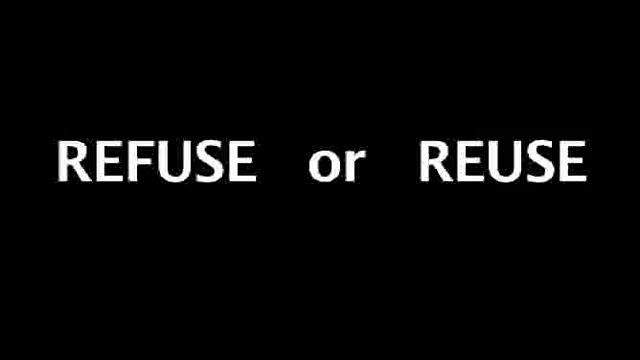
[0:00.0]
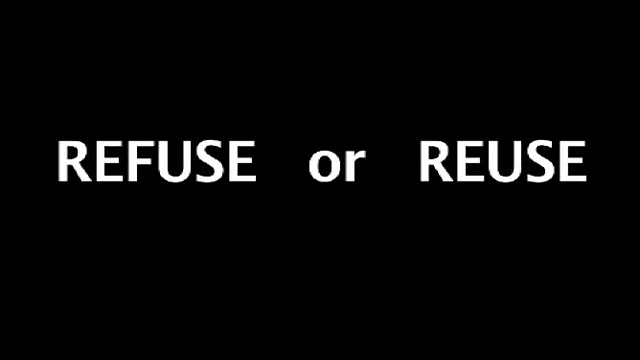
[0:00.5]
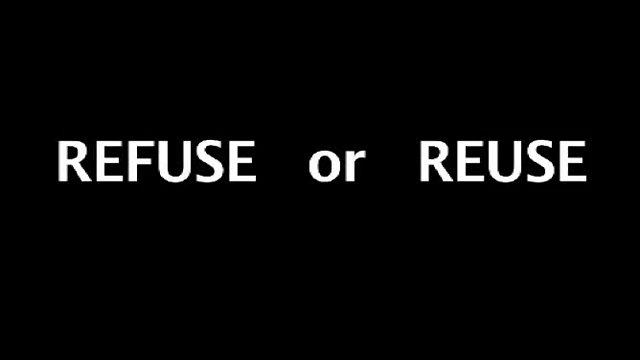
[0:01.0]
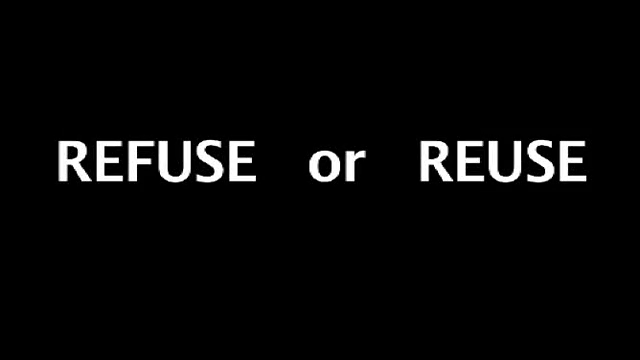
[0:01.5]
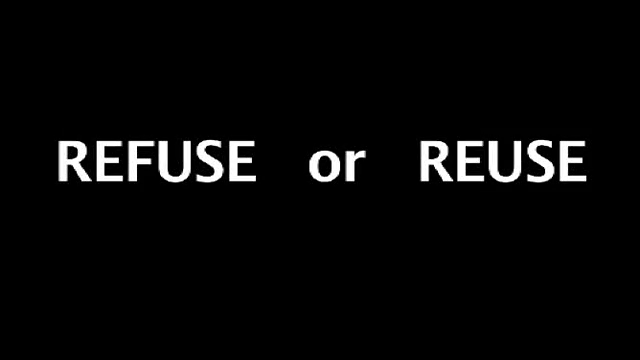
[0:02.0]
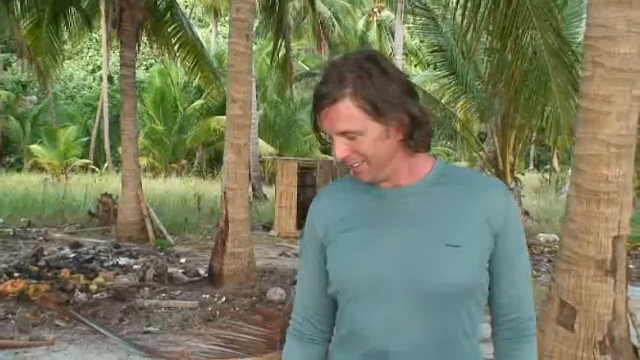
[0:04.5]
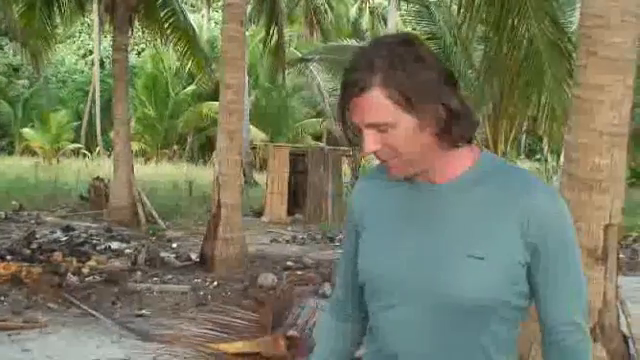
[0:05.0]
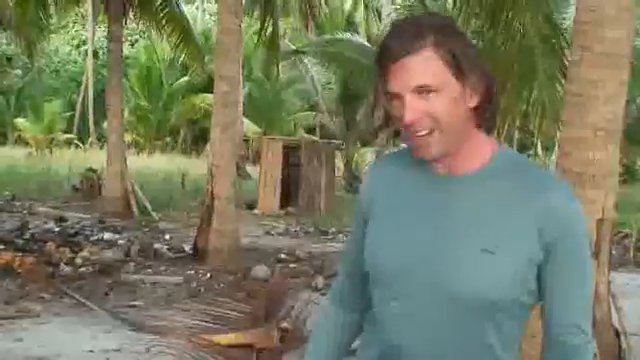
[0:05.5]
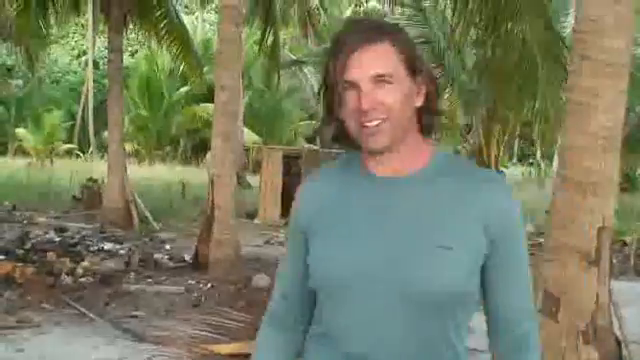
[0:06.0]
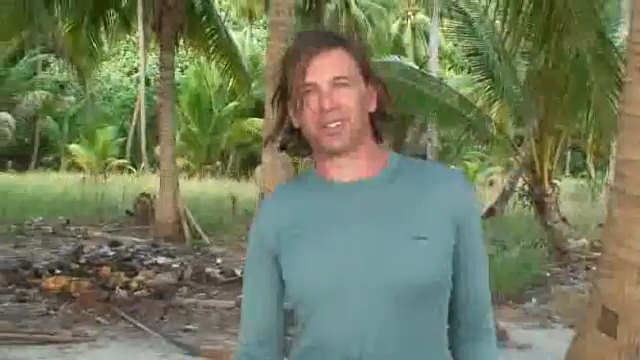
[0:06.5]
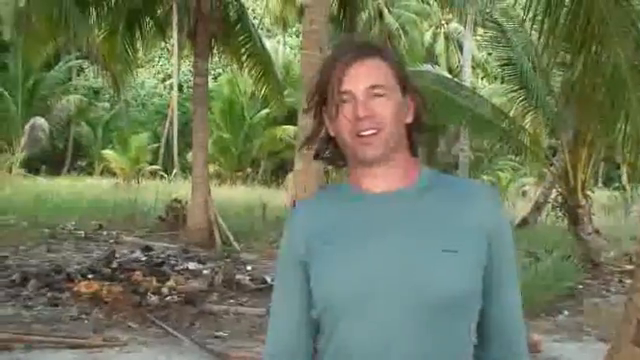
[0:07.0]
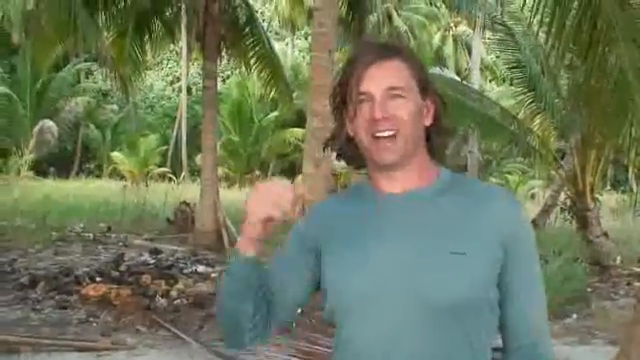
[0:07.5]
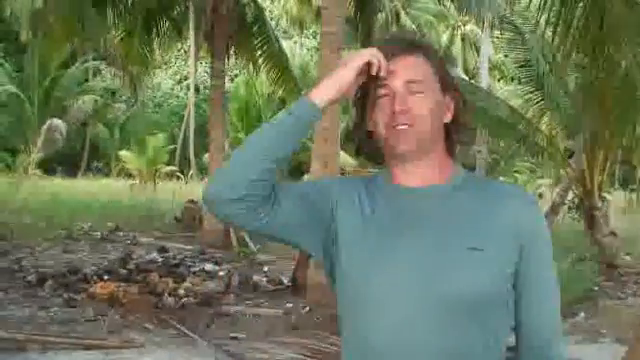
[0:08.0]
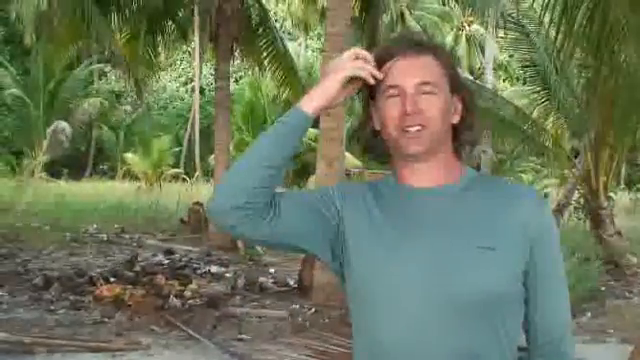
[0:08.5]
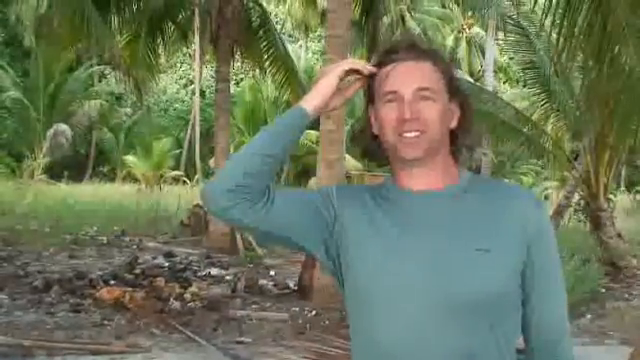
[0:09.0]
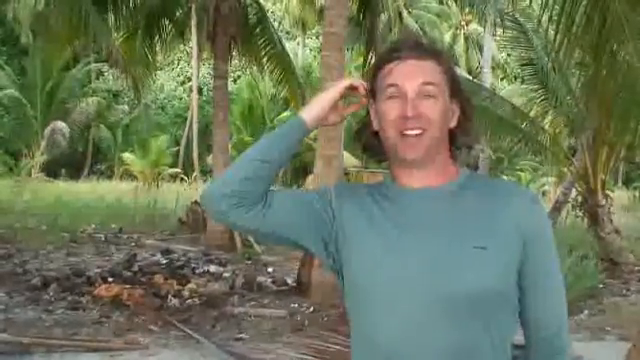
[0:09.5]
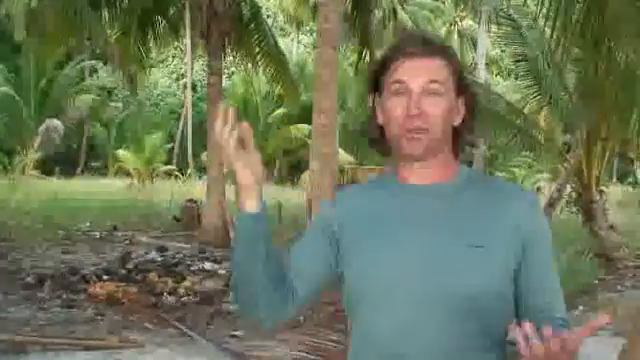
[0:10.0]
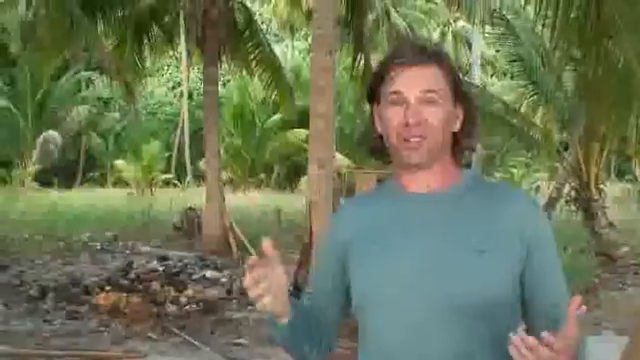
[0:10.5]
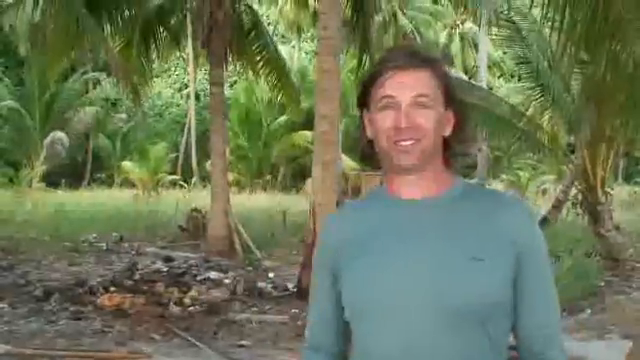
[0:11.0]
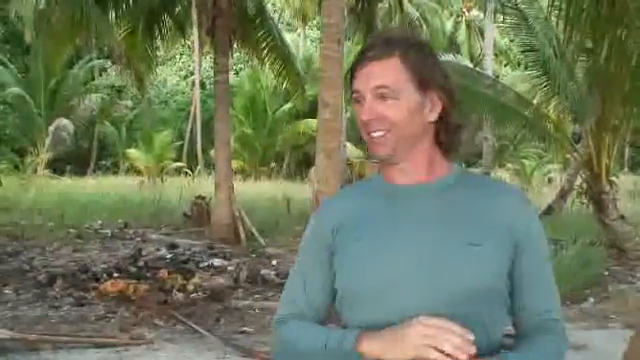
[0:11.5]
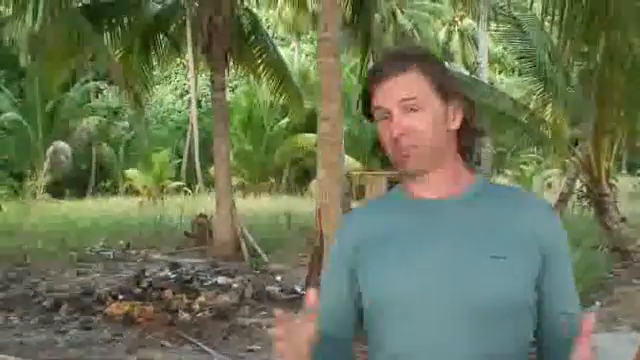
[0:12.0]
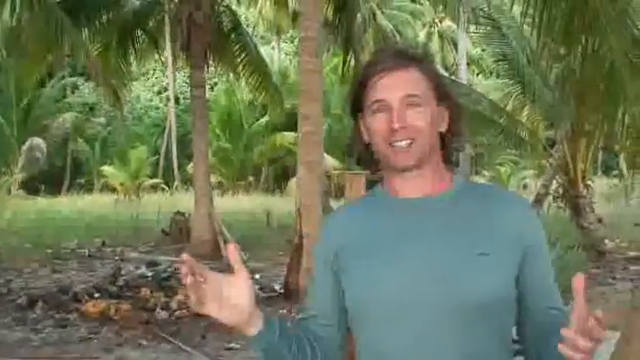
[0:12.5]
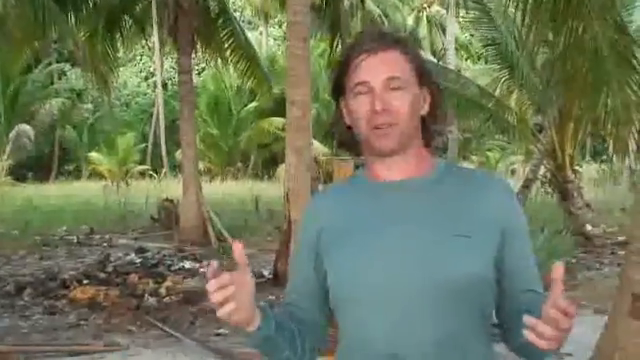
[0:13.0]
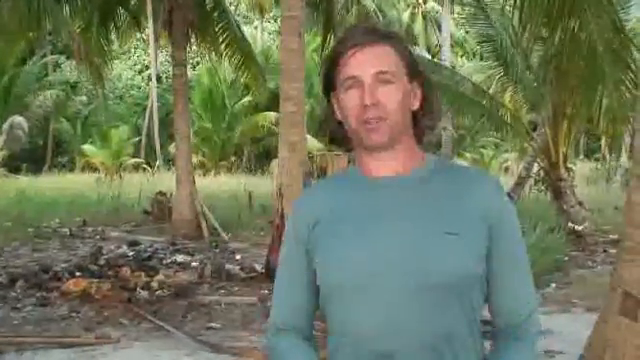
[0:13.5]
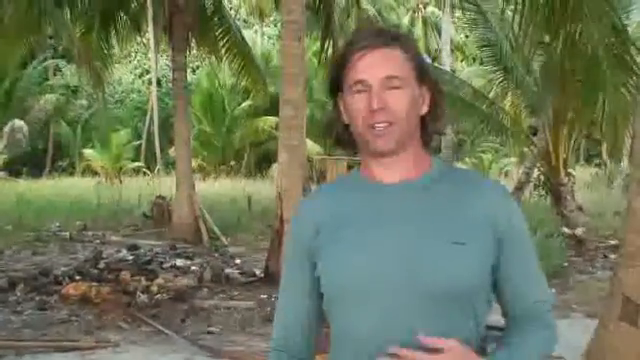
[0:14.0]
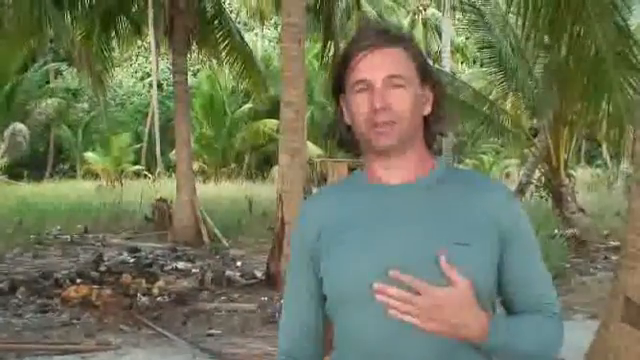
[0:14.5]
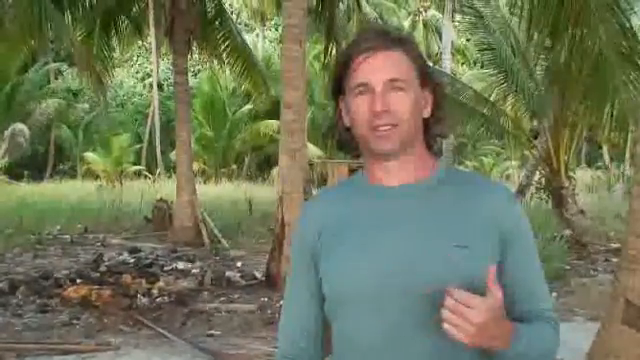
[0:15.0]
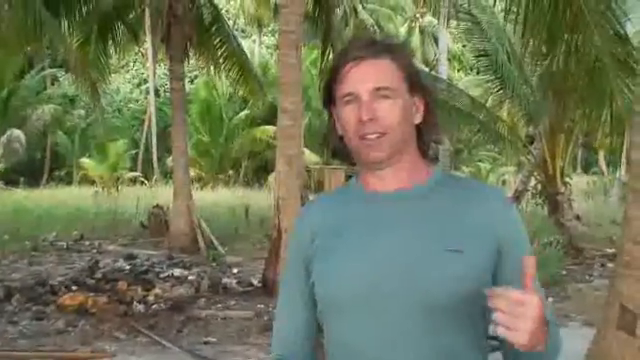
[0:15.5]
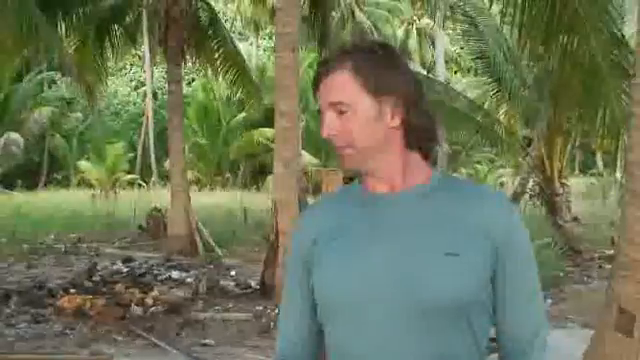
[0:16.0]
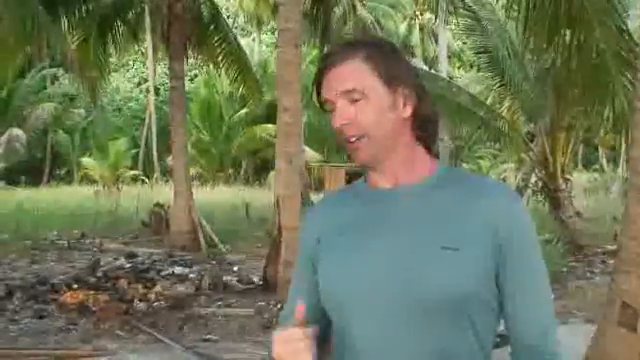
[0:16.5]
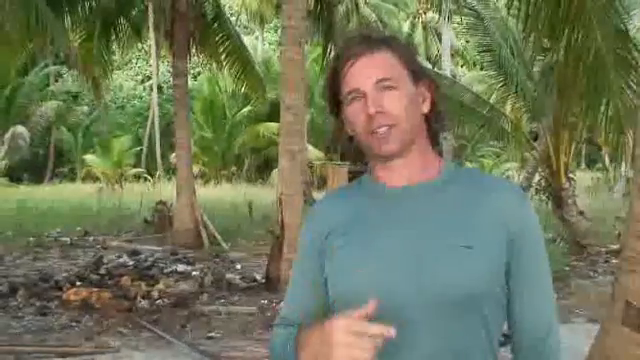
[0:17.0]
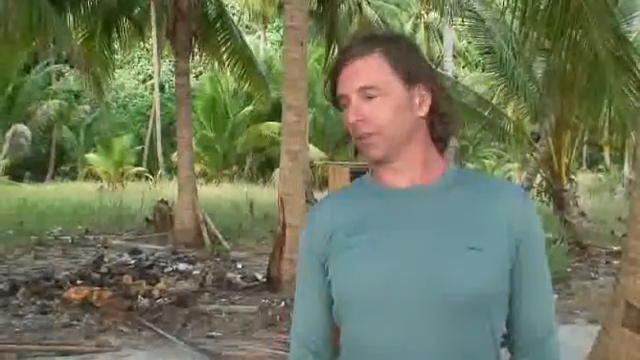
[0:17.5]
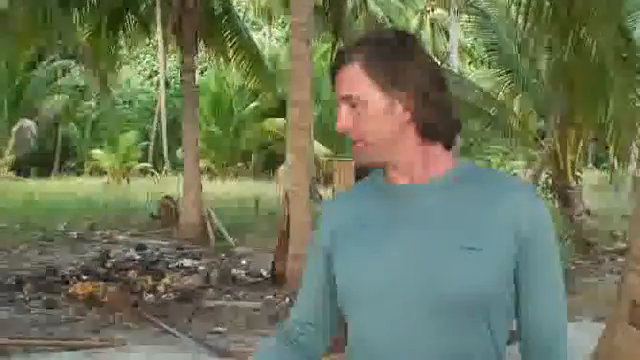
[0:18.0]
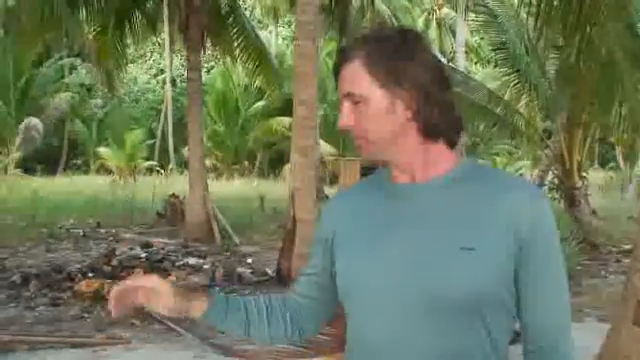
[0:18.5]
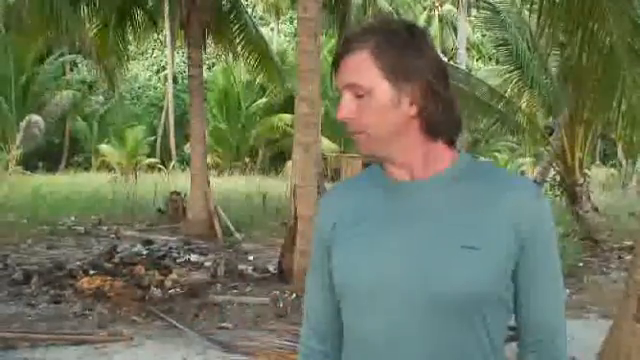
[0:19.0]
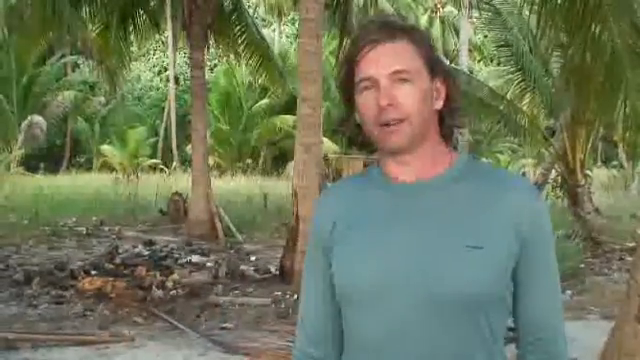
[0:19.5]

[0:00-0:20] A title appears with the words "refuse" and "reuse" in capital letters. A man with hair that covers his face, wearing a long-sleeved green shirt, then talks to the camera, which is not steady and keeps shaking. Behind him there is trash on the ground, along with some palm trees, other trees and some green grass. As he speaks, he keeps pointing at and looking at the ground beside him. His green shirt has some black text on the right side. He looks like he is in his 30s. While speaking, he moves his hair away from his face, gestures with his hands and raises his eyebrows. The leaves on the trees sway lightly in the wind.